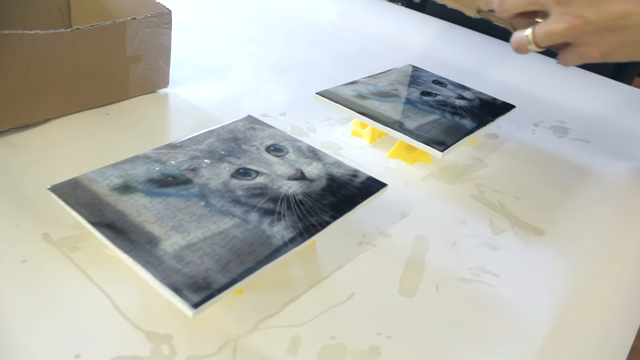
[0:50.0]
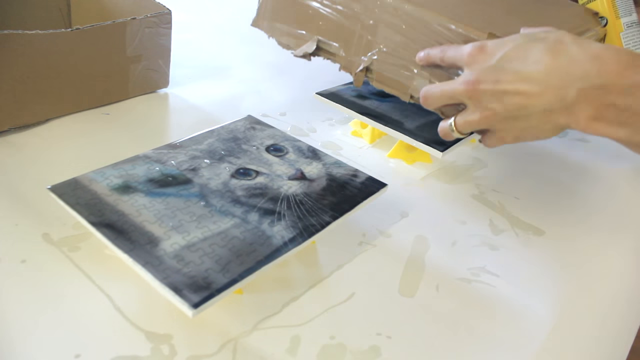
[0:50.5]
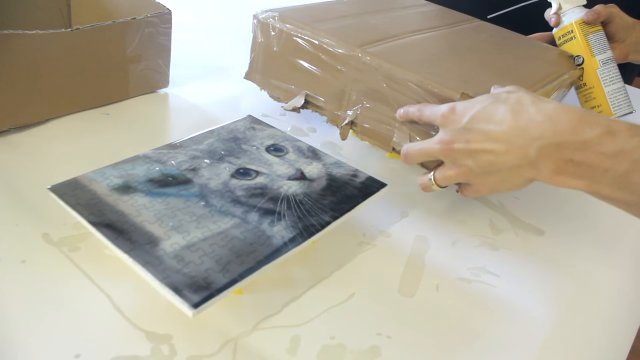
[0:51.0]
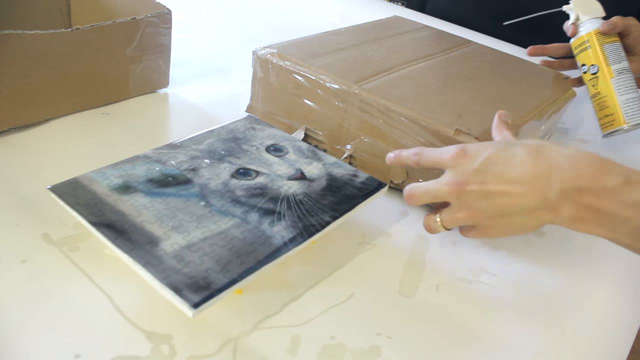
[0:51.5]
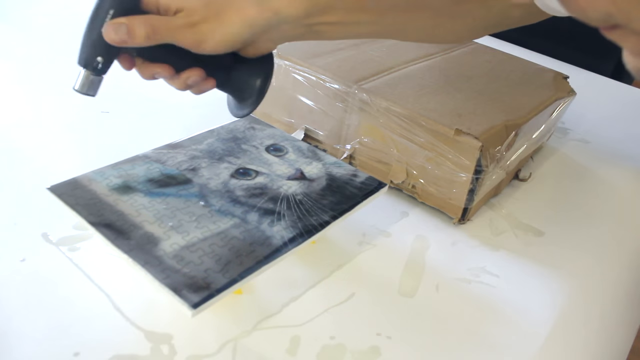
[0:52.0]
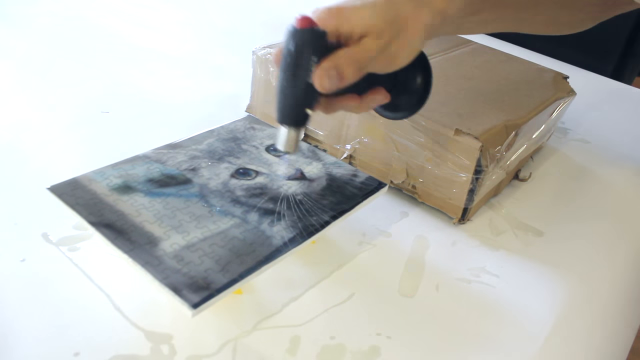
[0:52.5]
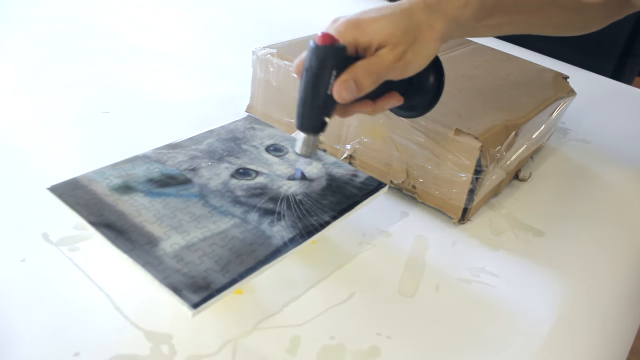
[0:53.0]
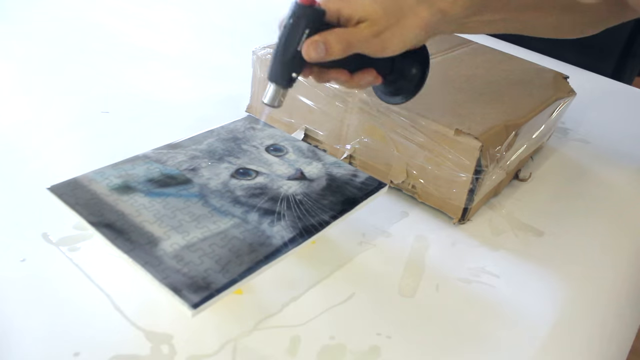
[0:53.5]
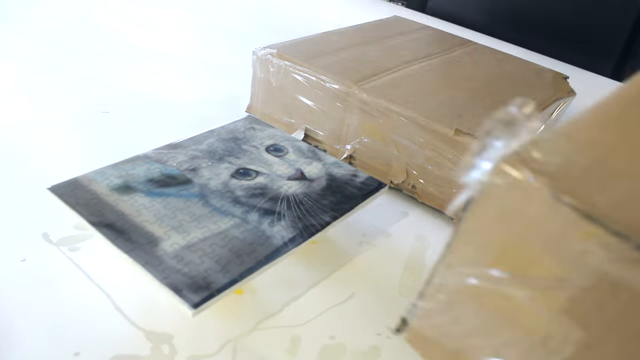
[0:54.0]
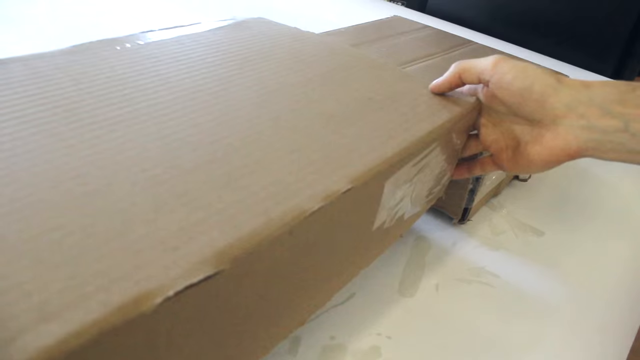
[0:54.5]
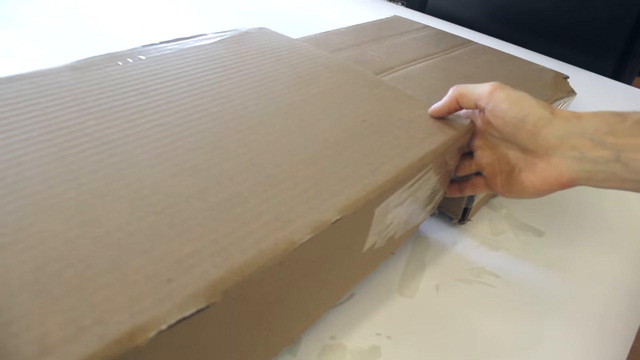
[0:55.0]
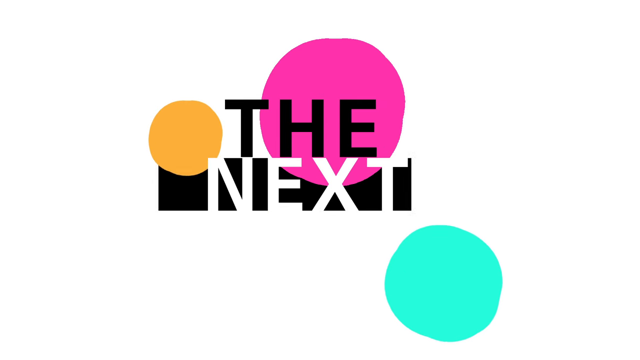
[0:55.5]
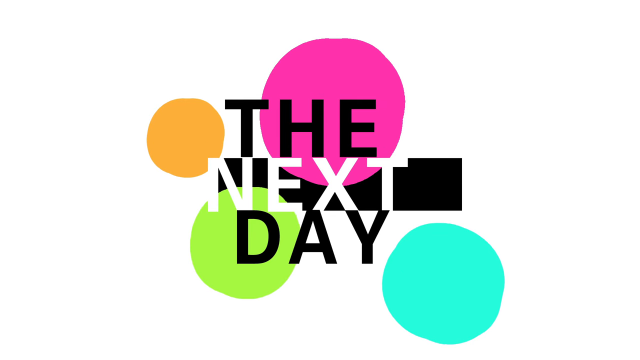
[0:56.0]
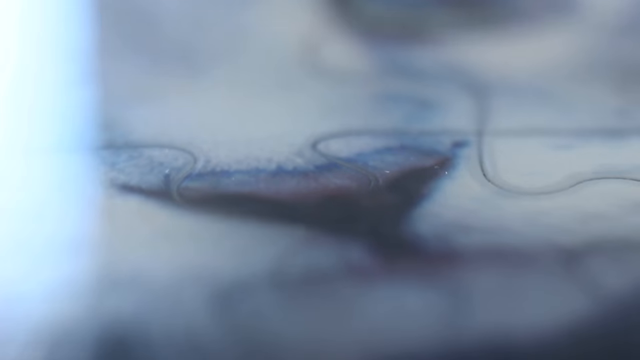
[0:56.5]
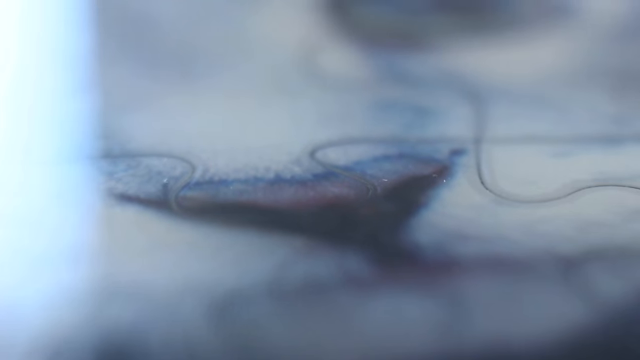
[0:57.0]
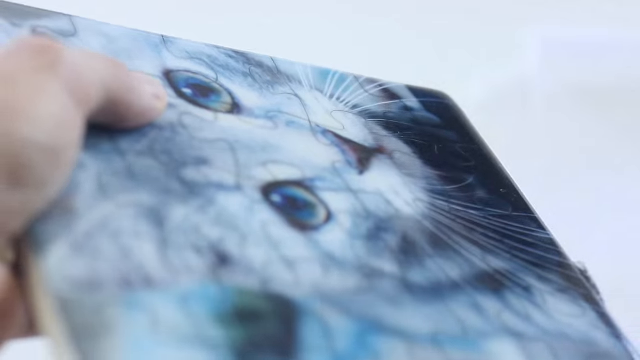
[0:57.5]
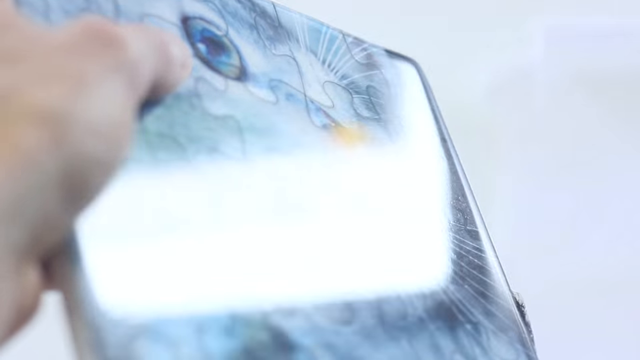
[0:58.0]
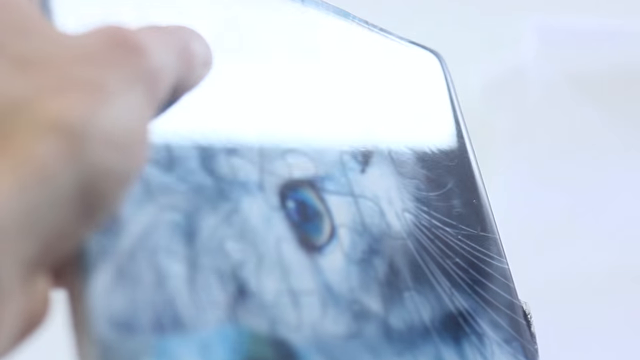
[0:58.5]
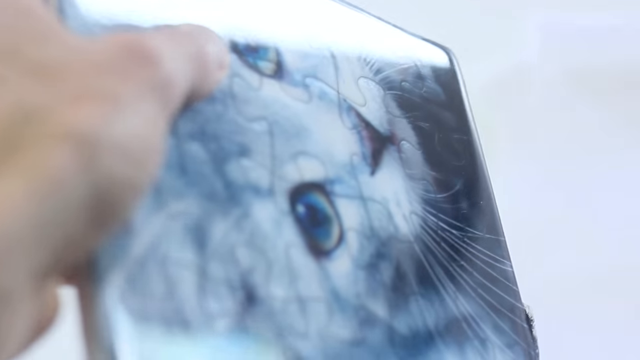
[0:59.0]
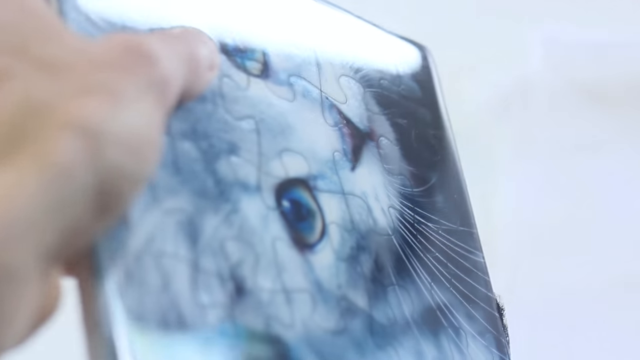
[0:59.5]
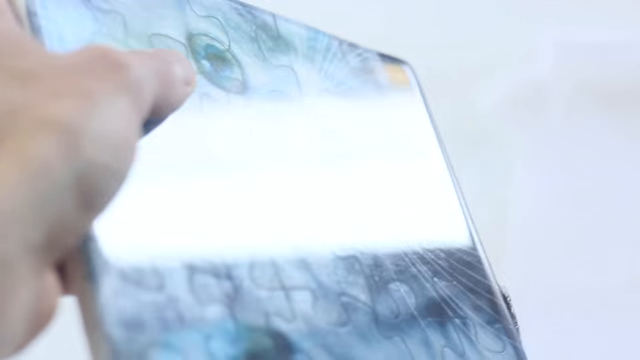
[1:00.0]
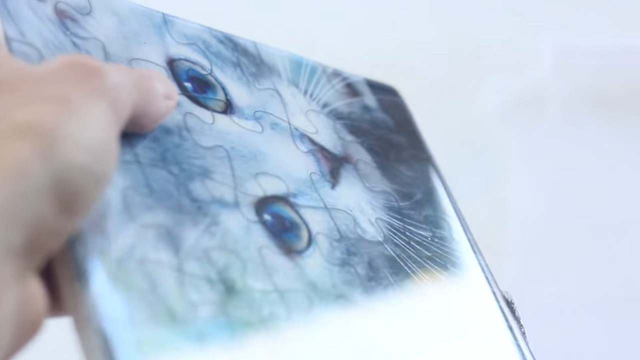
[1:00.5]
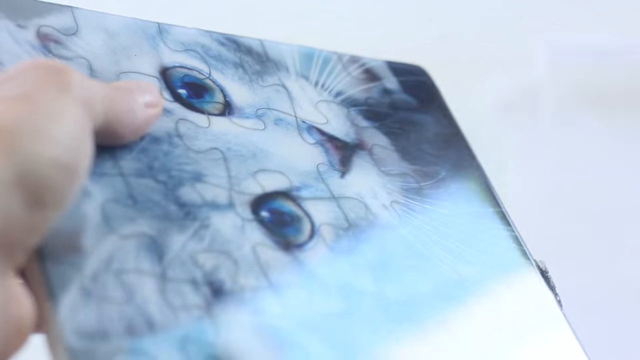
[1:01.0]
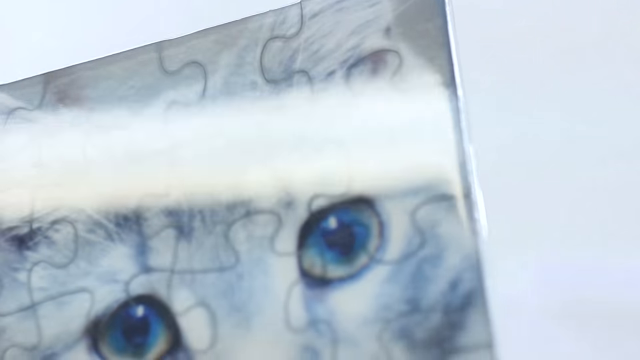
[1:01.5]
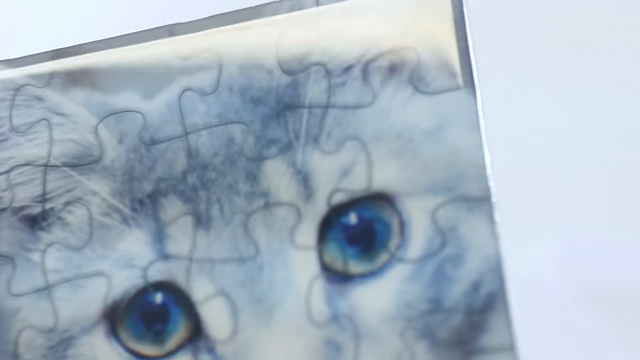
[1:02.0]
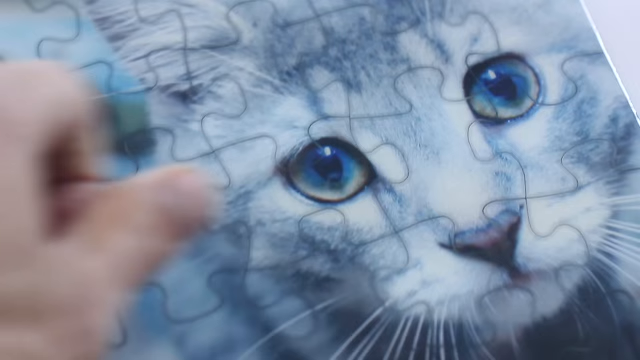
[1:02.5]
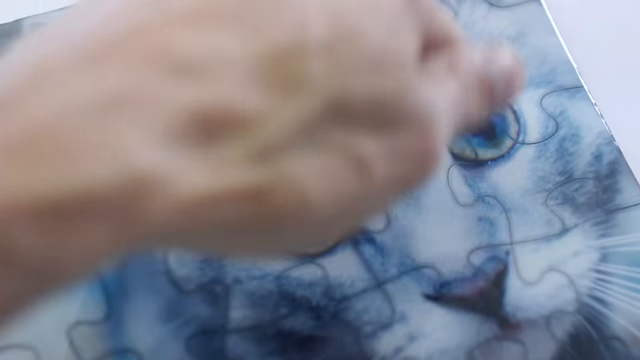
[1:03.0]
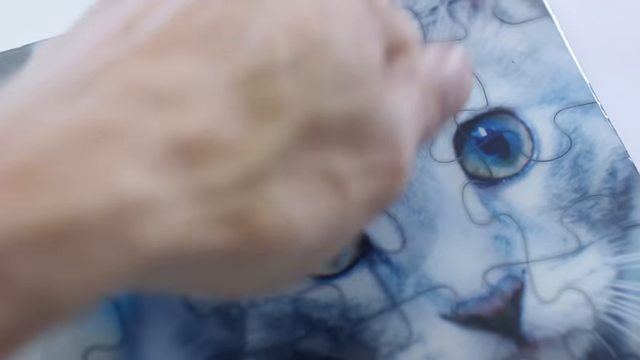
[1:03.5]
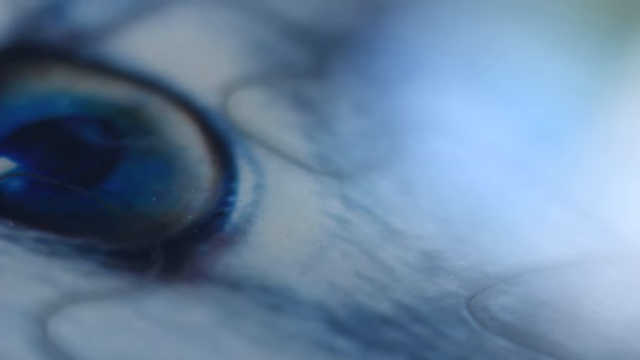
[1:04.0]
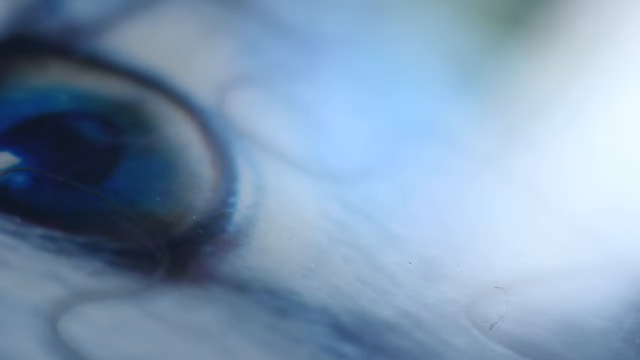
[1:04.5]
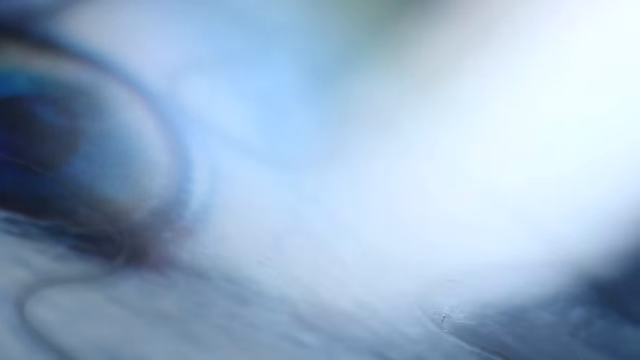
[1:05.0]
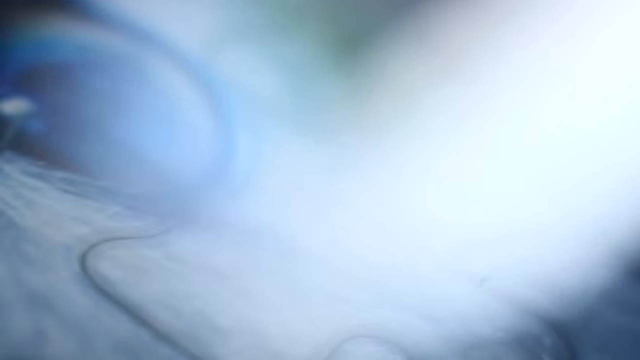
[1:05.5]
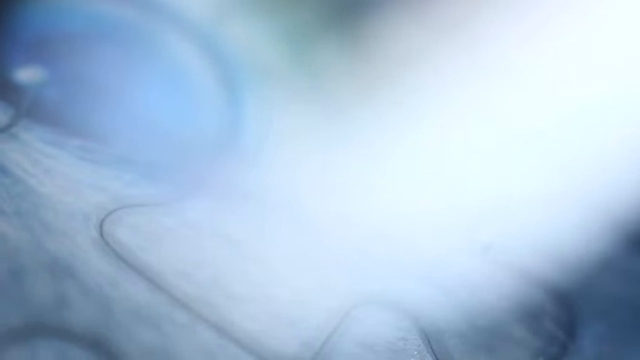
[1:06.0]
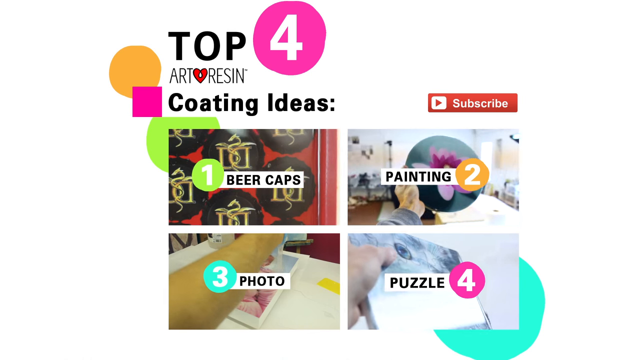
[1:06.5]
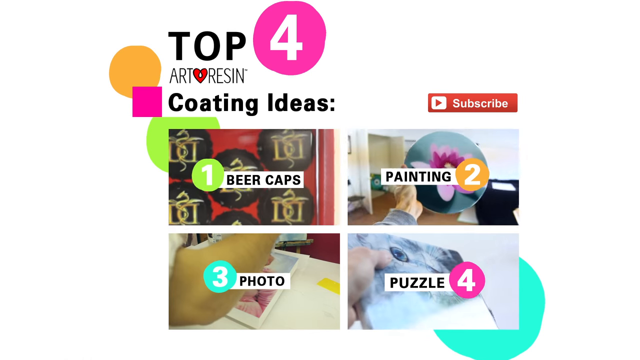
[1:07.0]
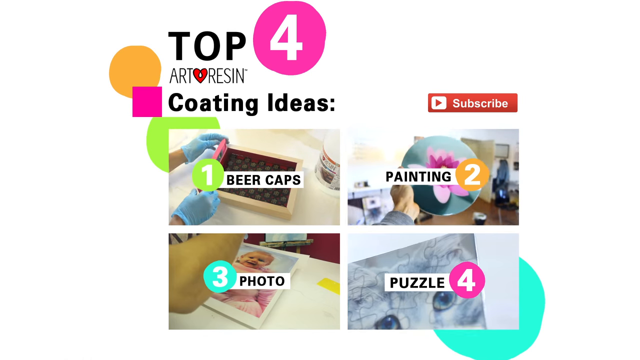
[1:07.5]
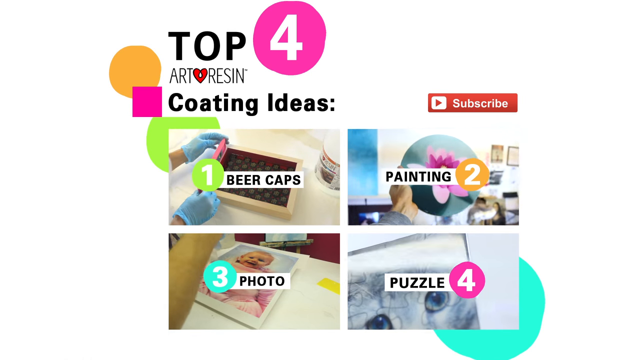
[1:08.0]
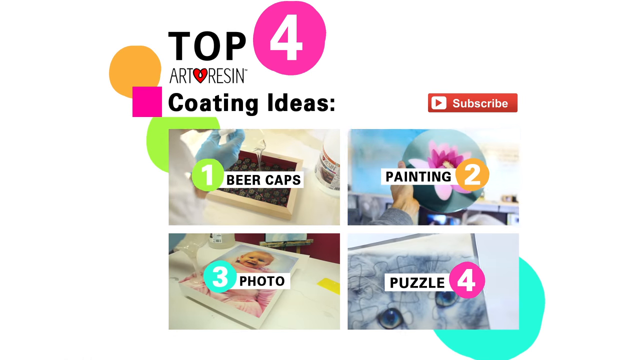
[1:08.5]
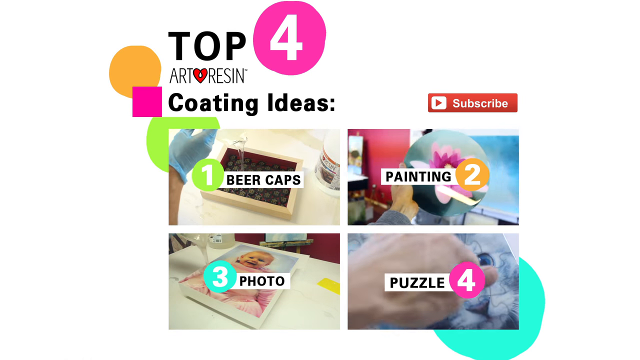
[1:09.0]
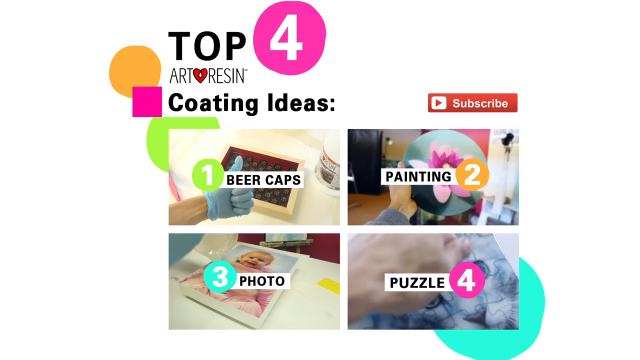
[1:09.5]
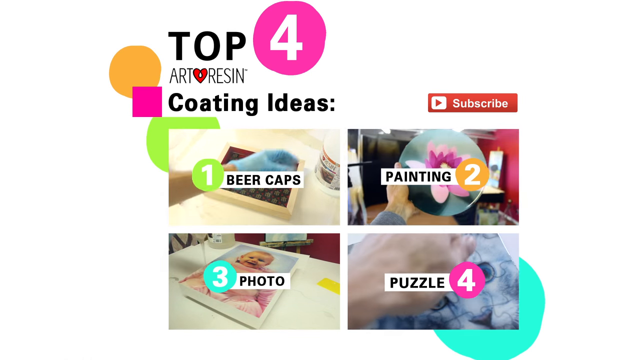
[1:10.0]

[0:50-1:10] The man takes a glue-like substance and puts it on top of the cat frame to make it shiny, and sprays with a black sprayer. He places two cardboard boxes on top of the cat frame, and the video shows the box on top. The cat frame is then shown the next day: it is very shiny and looks like glass because of the glue, and he knocks on it. Text reading "painting" appears on a somewhat transparent background with pink color, apparently an advertisement board listing "beer caps photo puzzle painting". An arrow says "subscribe", suggesting the video is on YouTube.